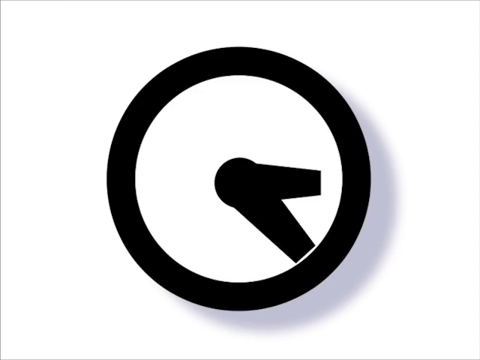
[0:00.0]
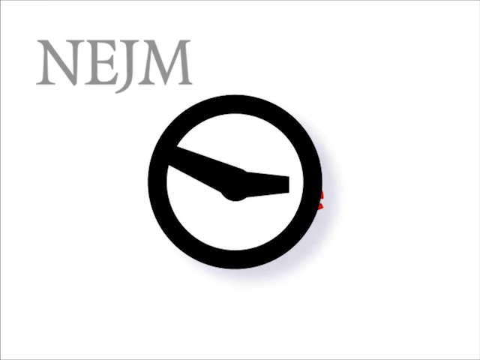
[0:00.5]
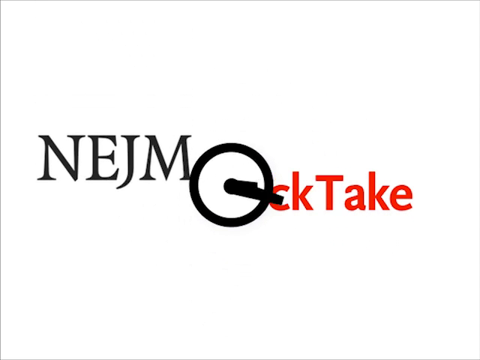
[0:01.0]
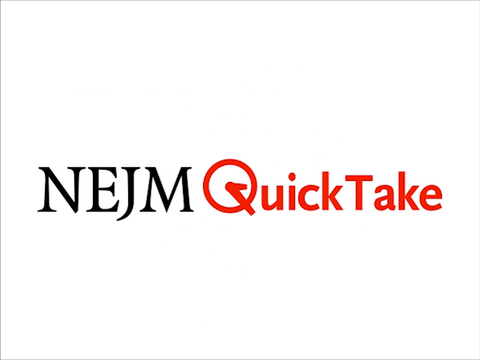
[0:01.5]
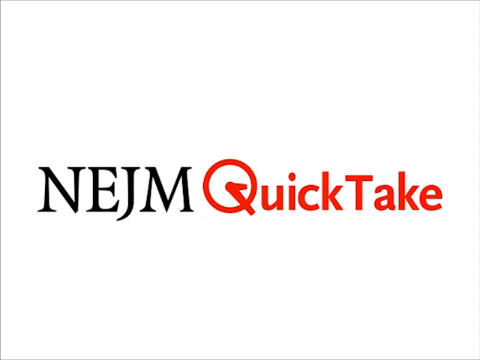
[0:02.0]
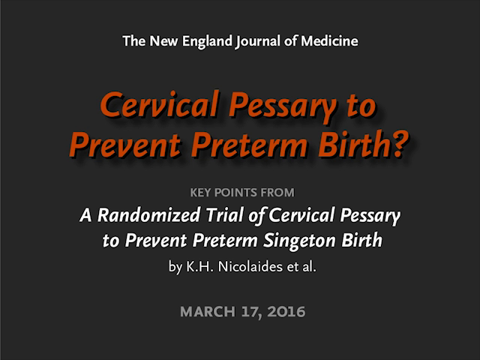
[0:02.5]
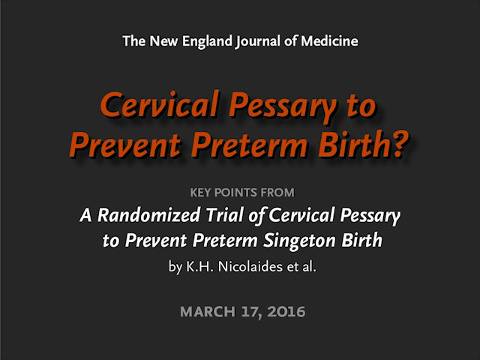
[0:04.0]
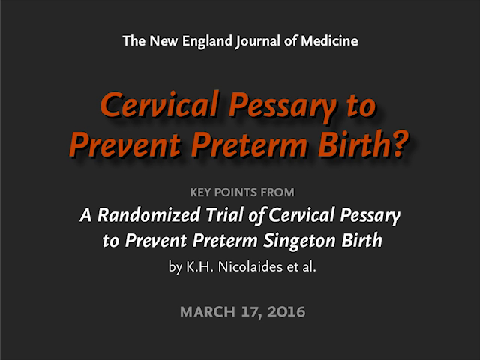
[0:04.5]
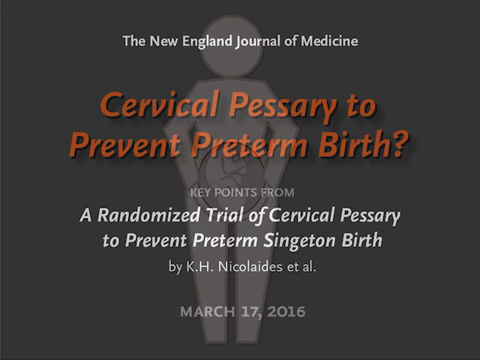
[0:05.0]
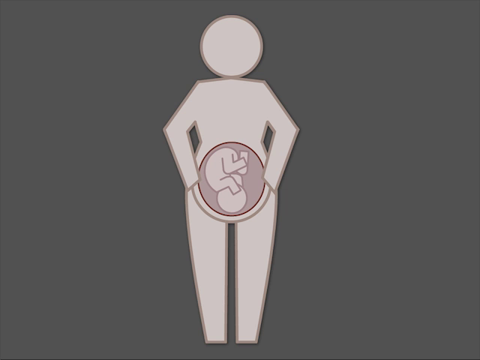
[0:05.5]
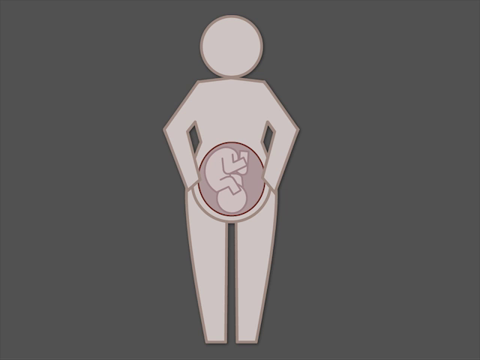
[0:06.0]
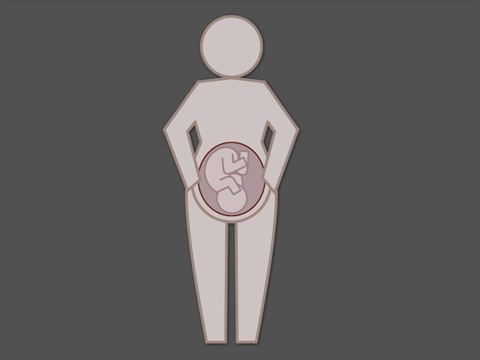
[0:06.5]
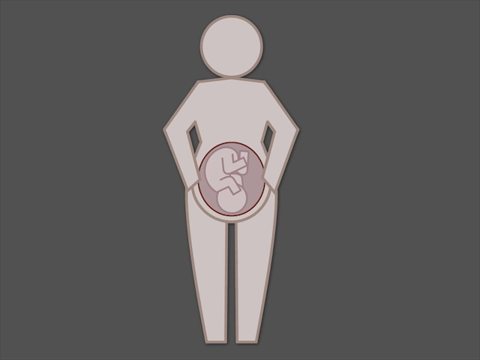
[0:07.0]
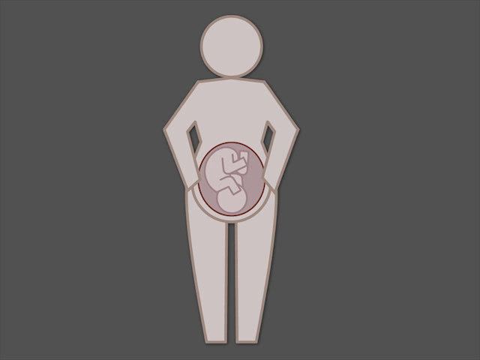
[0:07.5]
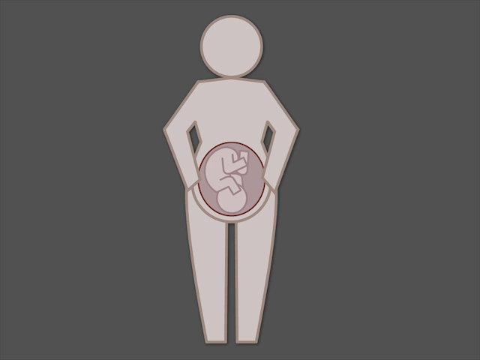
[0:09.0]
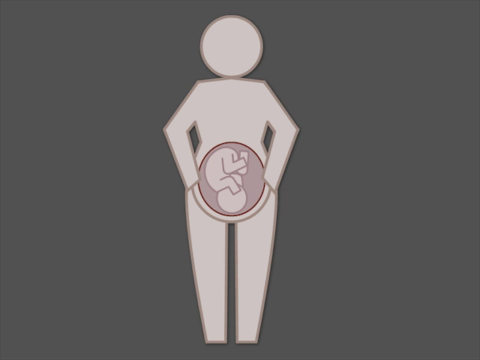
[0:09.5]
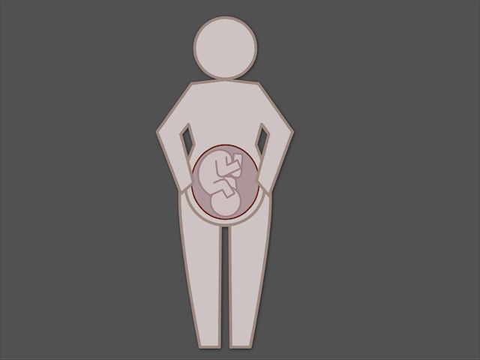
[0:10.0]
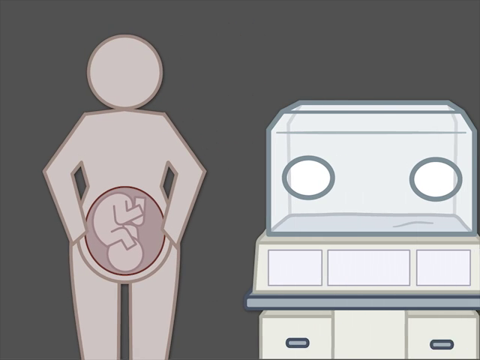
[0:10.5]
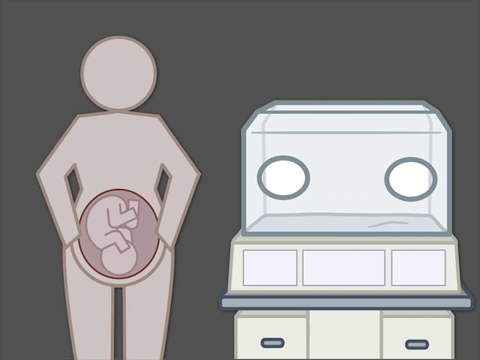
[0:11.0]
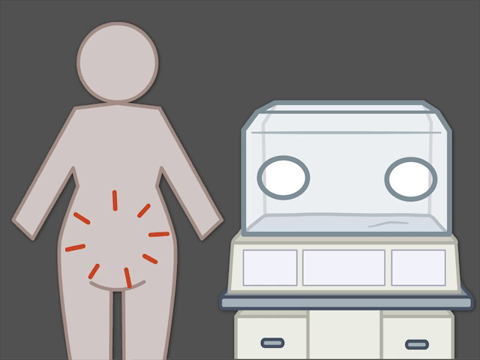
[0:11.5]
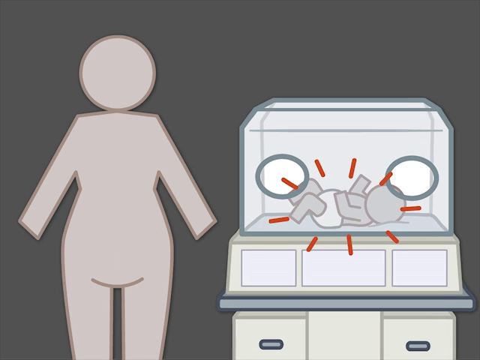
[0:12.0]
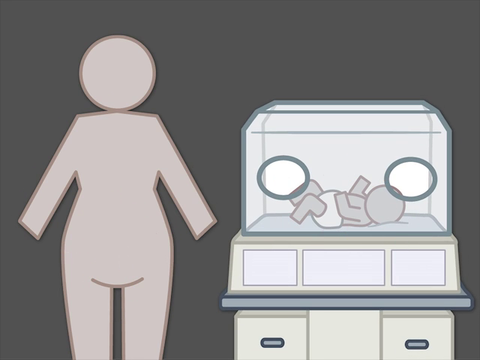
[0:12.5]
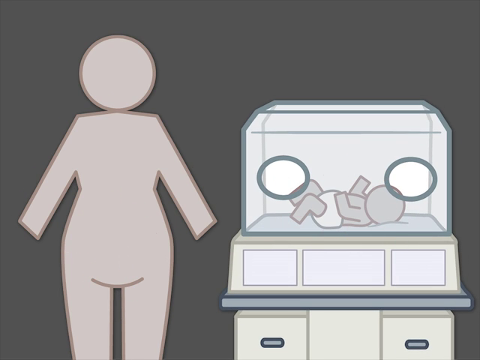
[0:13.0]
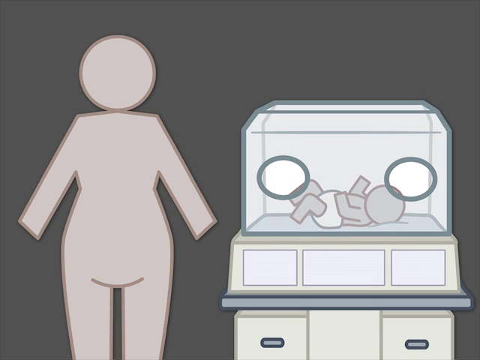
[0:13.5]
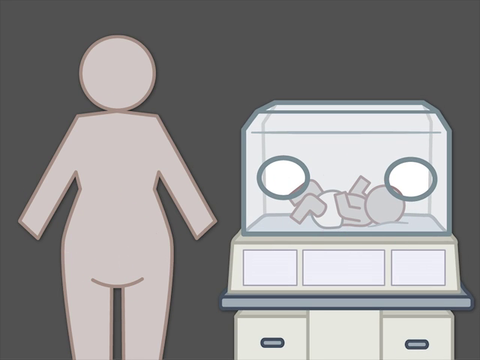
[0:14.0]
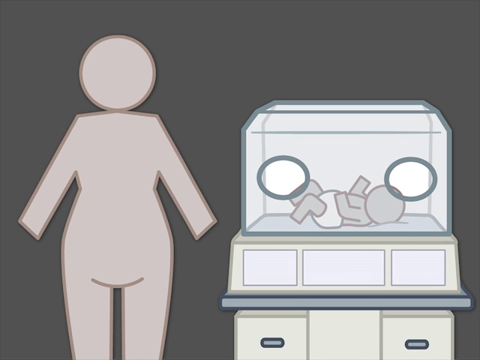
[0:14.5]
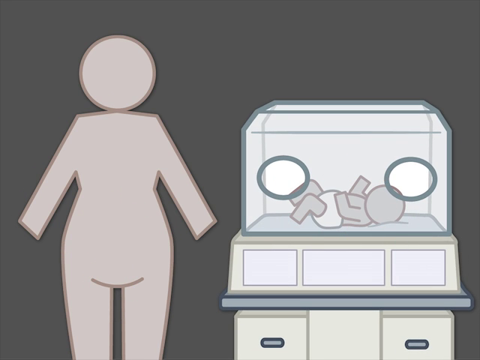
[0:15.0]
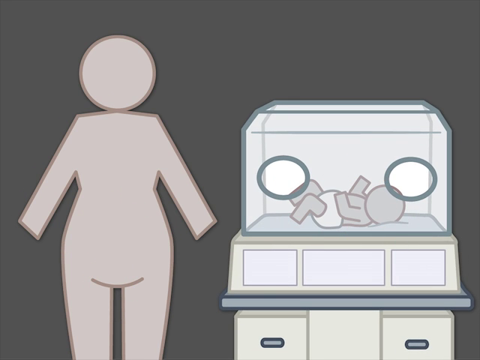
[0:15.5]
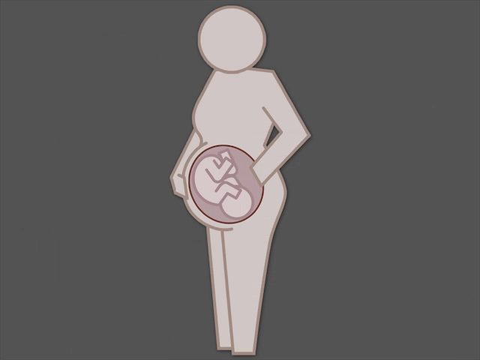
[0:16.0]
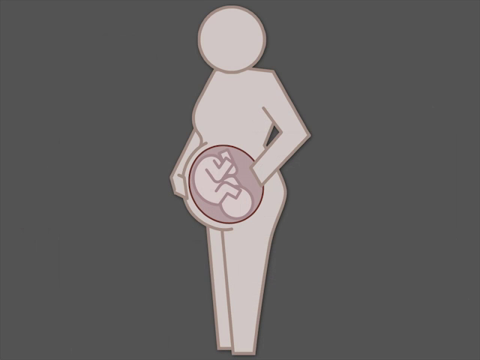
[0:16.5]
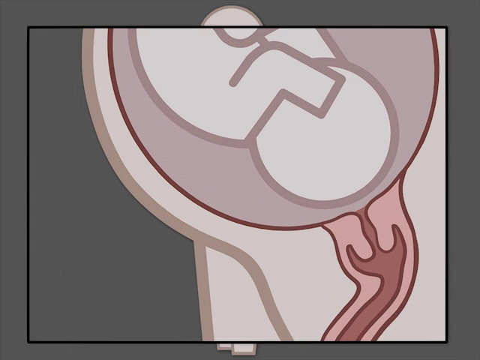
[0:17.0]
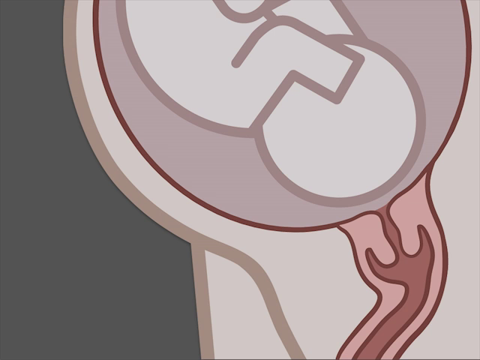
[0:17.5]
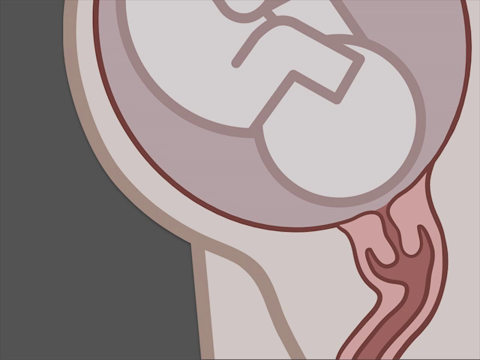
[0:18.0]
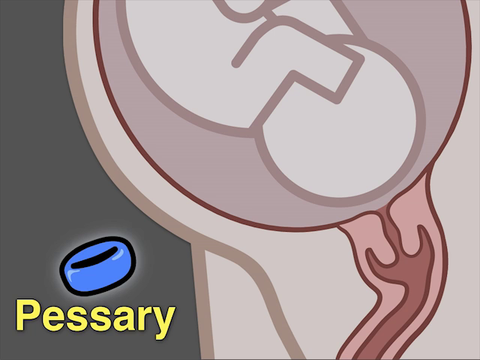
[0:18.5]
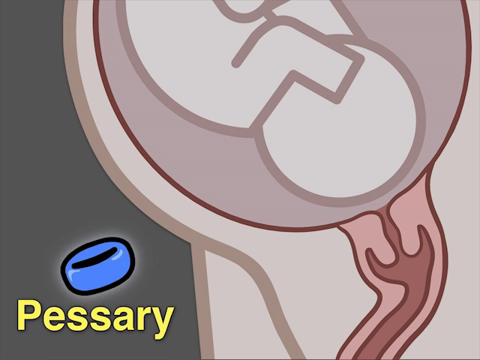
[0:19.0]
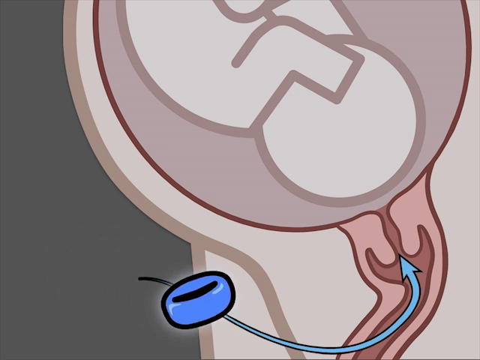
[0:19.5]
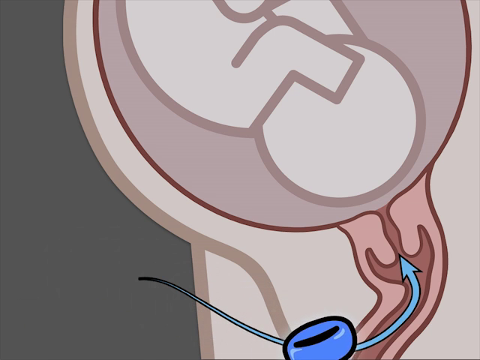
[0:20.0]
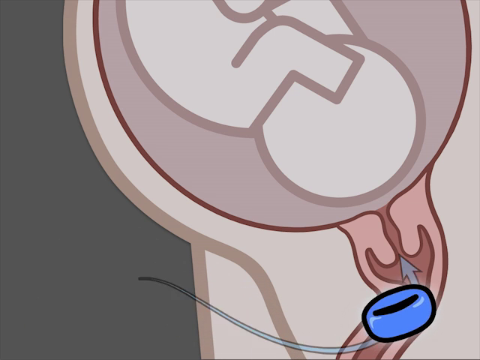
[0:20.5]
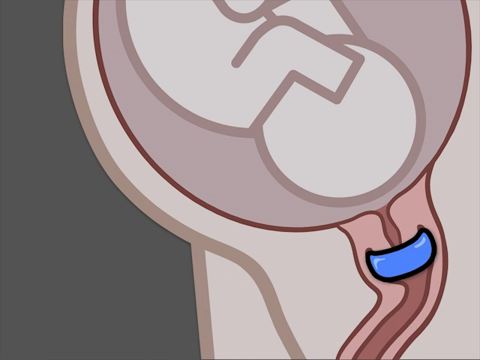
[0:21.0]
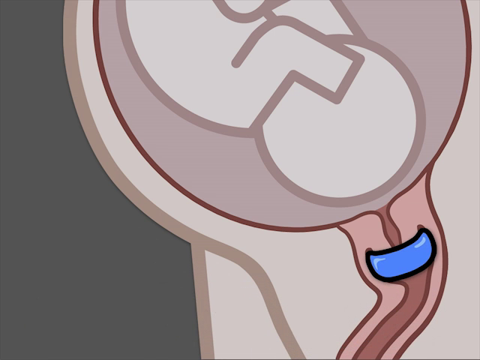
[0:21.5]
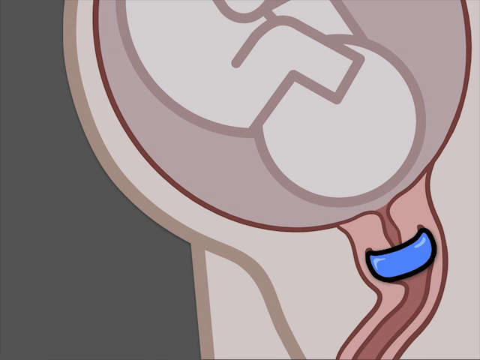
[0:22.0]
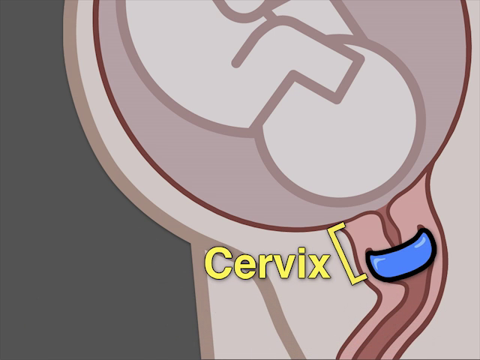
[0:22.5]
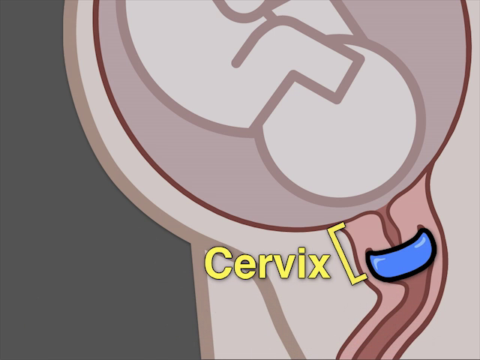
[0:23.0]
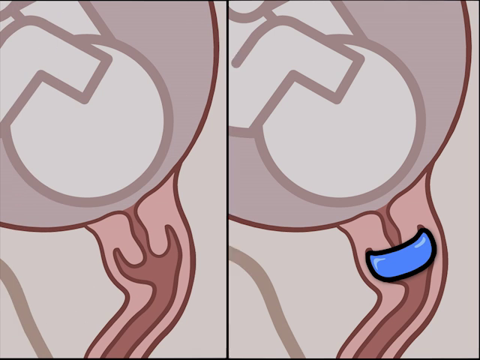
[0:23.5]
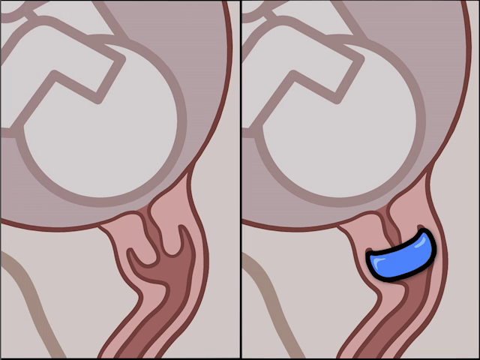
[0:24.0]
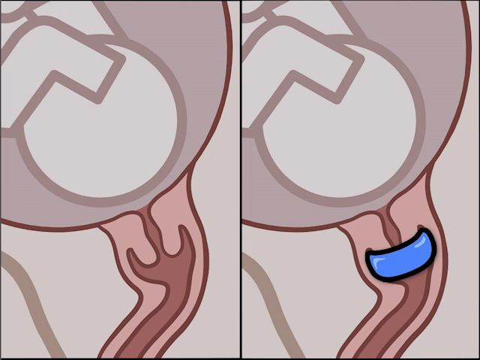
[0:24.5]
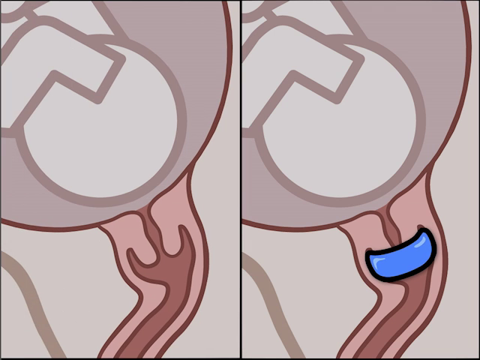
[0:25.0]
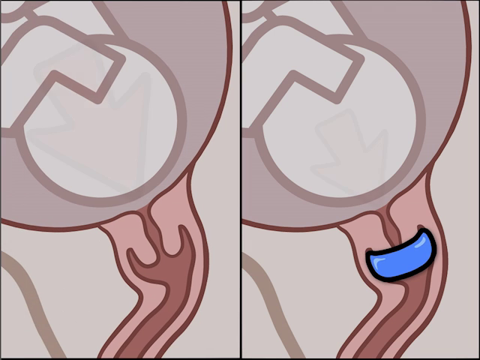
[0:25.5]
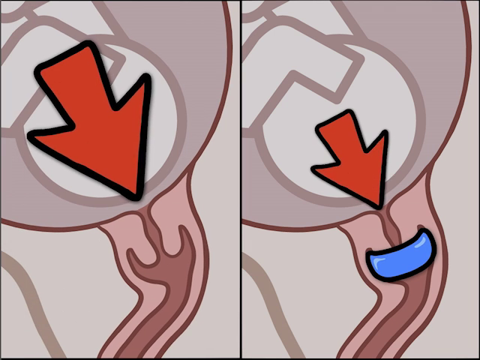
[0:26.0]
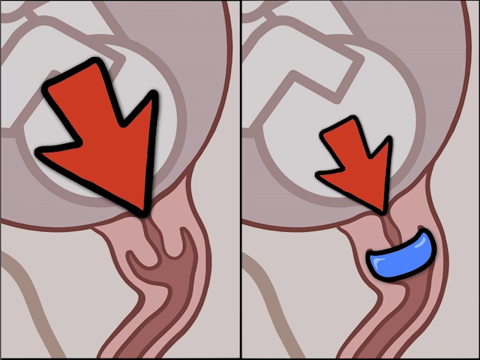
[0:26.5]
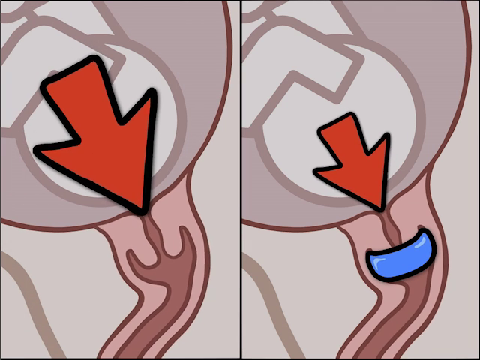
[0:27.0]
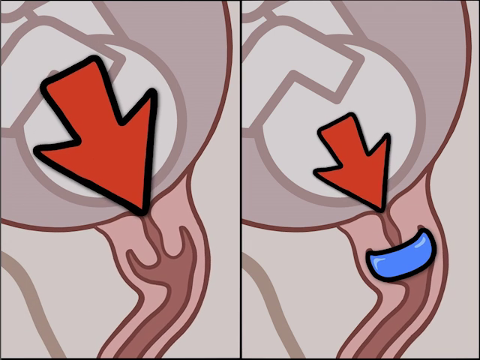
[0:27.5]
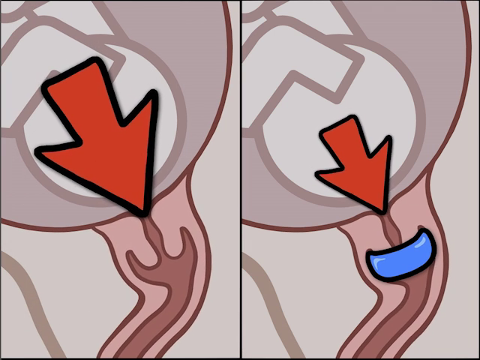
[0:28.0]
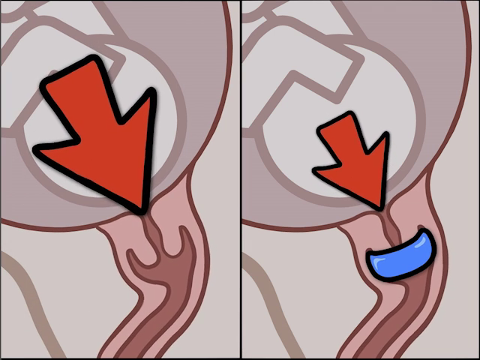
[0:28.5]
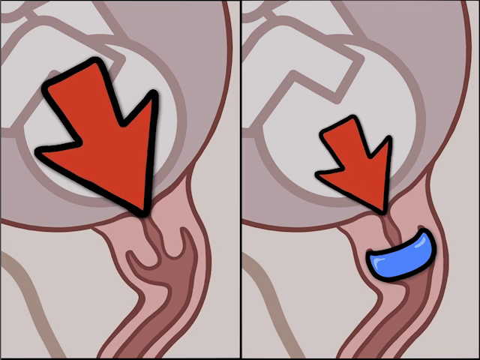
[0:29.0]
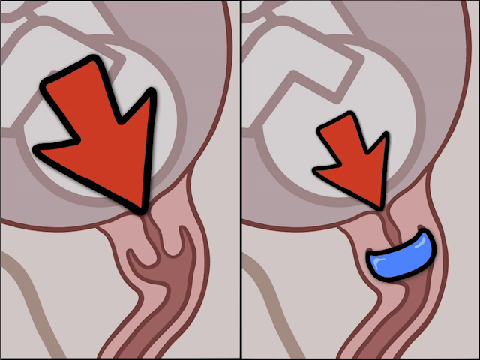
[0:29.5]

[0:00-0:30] The video opens with a logo that looks like an analog wall clock with no numbers: just a black circle with big black hour and minute hands. The hands move around a little, then the clock shrinks back into the screen and text appears on the left and right sides. On the left are the letters "N-E-J-M", and the clock turns into a Q, spelling out "Quick Take". Next comes a screen with a gray background and white text at the top reading "the New England Journal of Medicine, cervical pessary to prevent preterm birth, key points from a randomized trial of cervical pessary to prevent preterm singleton birth by K.H. NICOLAIDES, ET AL., March 17, 2016." A very basic animated drawing of a pregnant woman follows. There is a circle over her stomach, and inside it an upside-down baby is visible. Her elbows are slightly bent out and her hands are on her stomach, though the hands are not drawn and the arms stop at the wrists. The view zooms out a little, the woman moves to the side, and an incubator pops up on the right. The baby disappears from the woman's stomach and appears in the incubator, with some orange lines indicating action. The drawing returns to the pregnant woman alone, this time turned to the side, and the view zooms into her stomach where the baby's head is at the bottom of the womb. A blue ring appears and moves over to a blue arrow pointing toward the cervix near the bottom of the womb. The ring is then attached to the cervix, as if closing off that section of the uterus. The word "cervix" appears with a bracket marking where the cervix is, just about where the blue ring was placed. The womb is then compared side by side with a very similar womb that lacks the blue ring, with a red arrow pointing at the cervix in both. The arrows move up and down, and the cervix moves a little with the arrow.